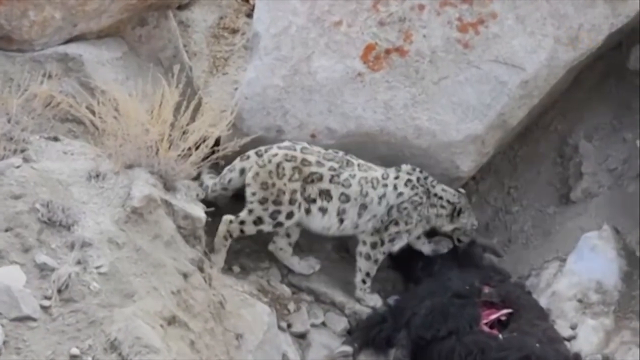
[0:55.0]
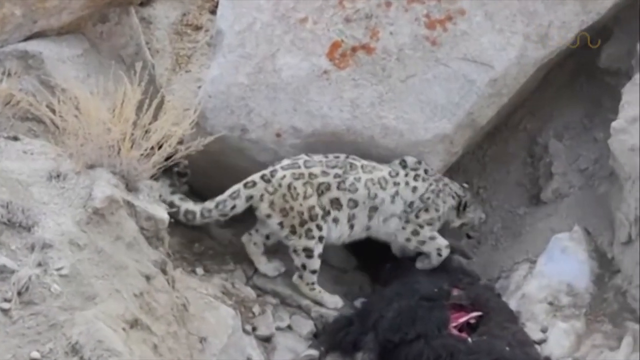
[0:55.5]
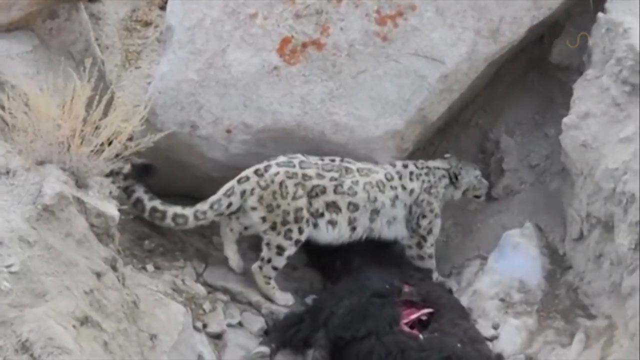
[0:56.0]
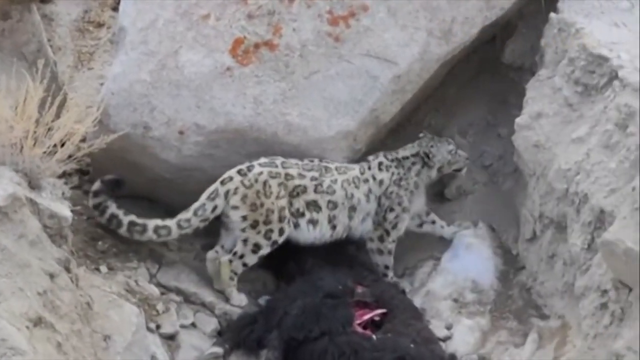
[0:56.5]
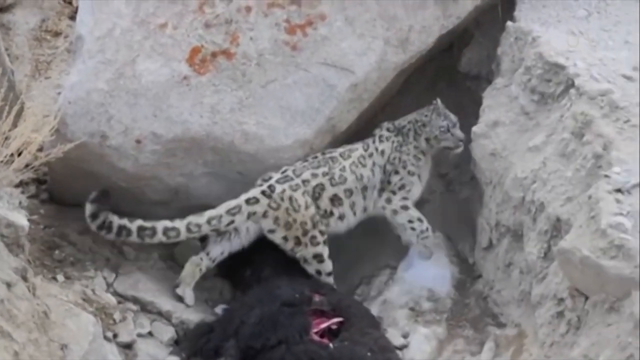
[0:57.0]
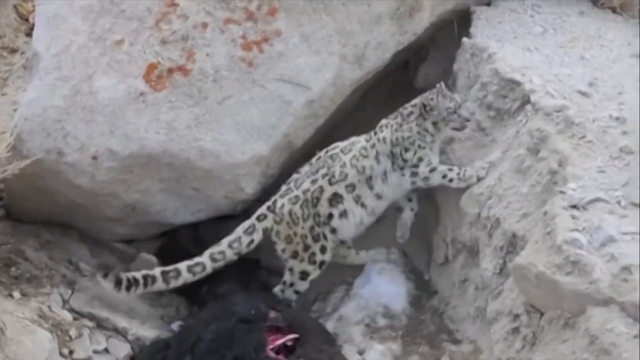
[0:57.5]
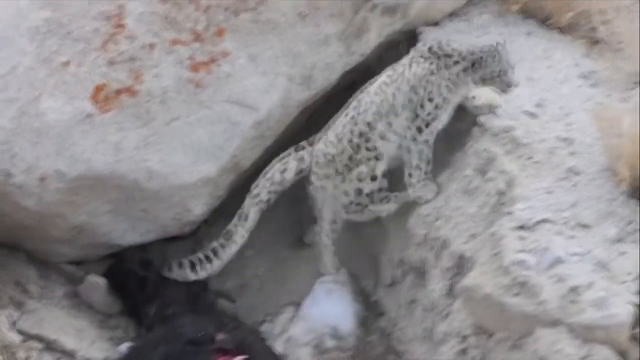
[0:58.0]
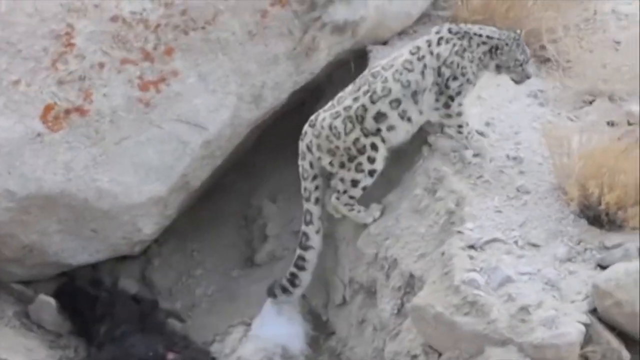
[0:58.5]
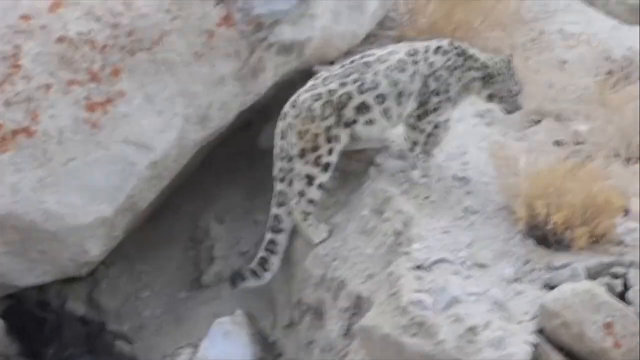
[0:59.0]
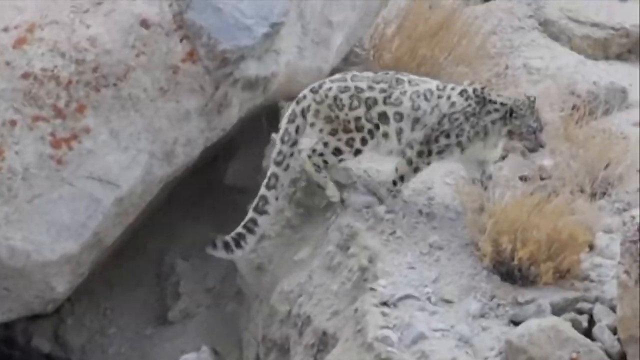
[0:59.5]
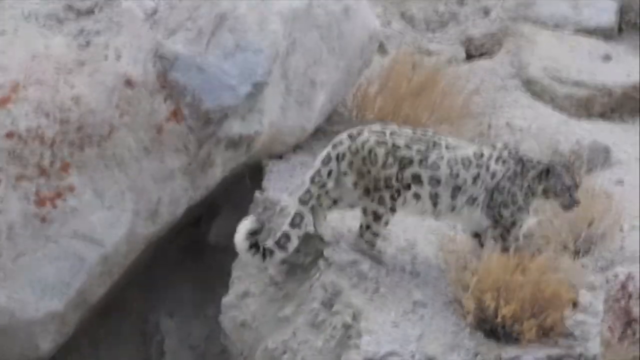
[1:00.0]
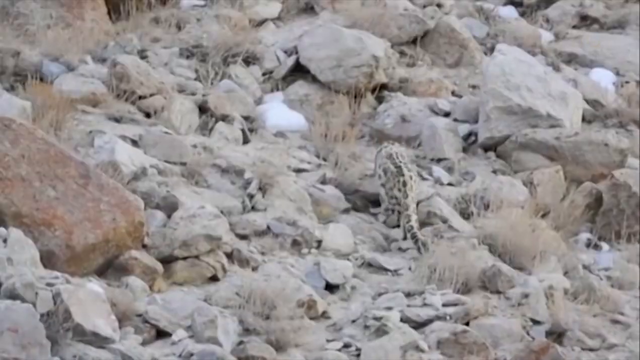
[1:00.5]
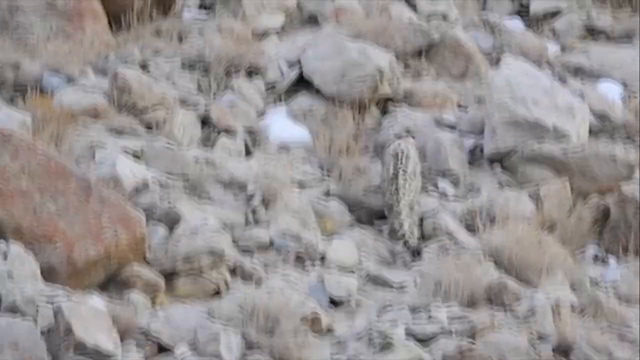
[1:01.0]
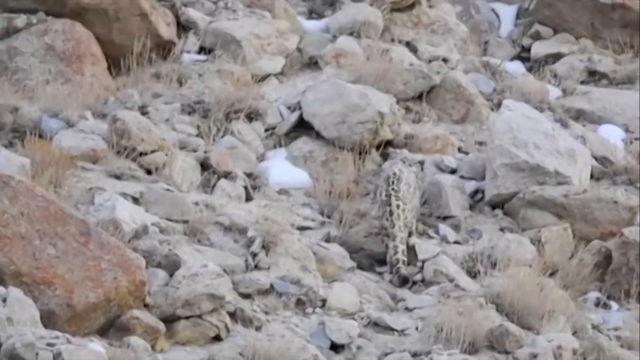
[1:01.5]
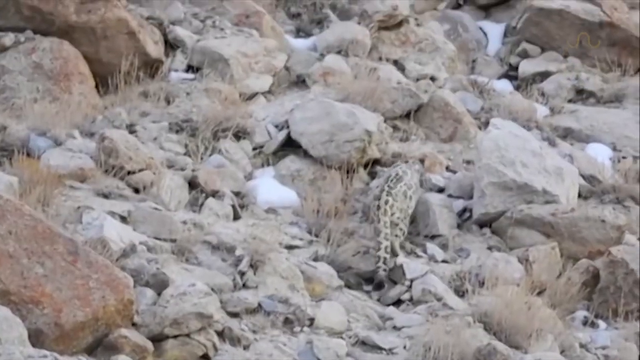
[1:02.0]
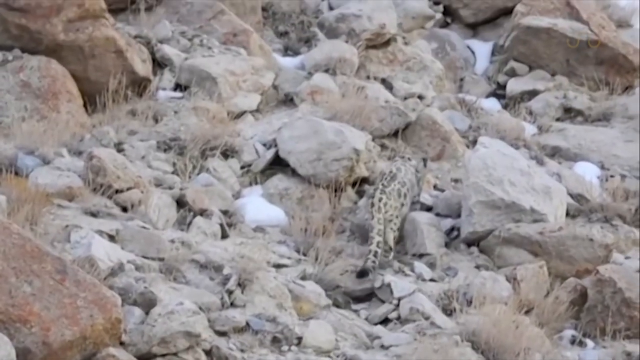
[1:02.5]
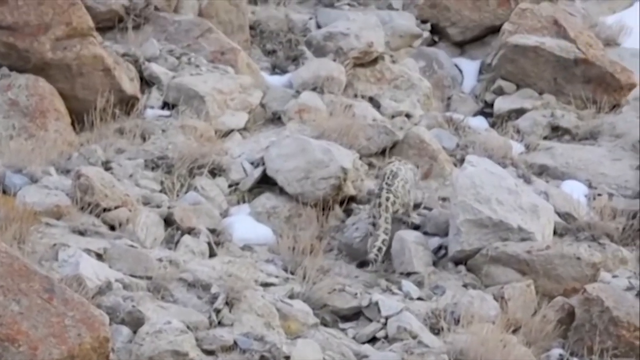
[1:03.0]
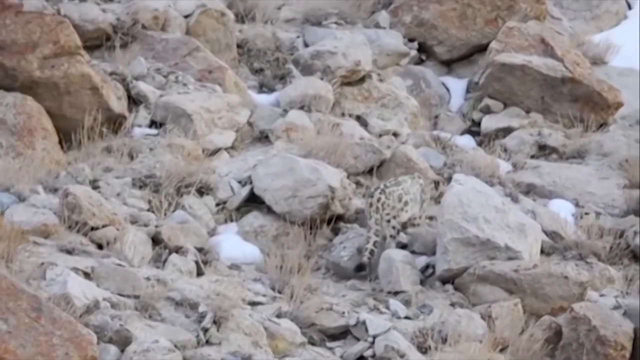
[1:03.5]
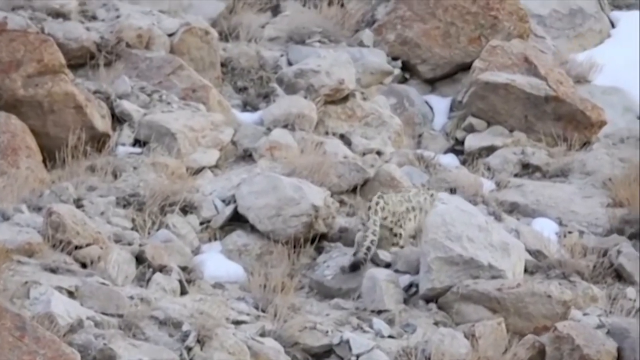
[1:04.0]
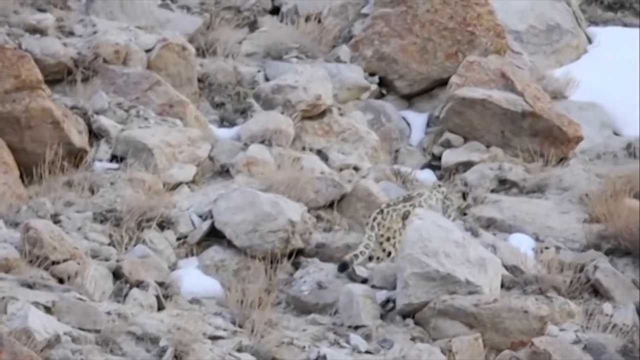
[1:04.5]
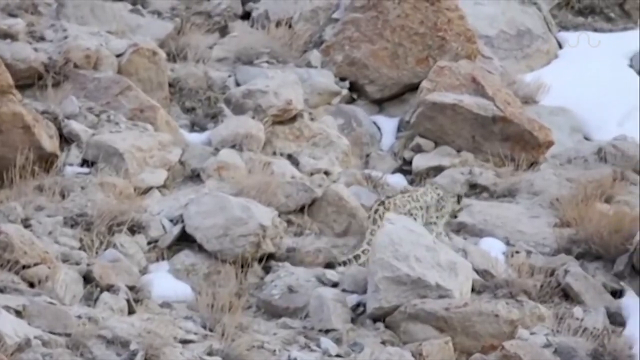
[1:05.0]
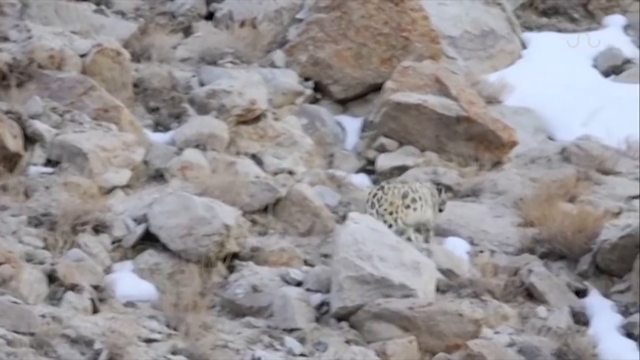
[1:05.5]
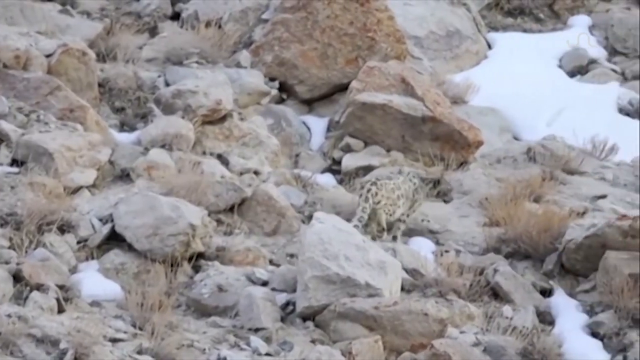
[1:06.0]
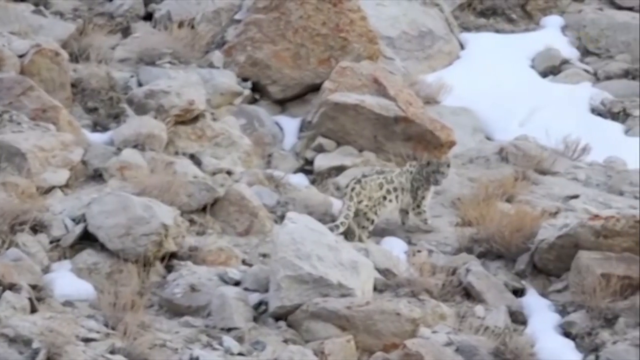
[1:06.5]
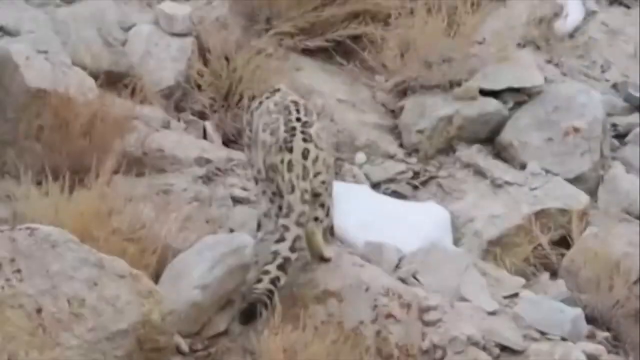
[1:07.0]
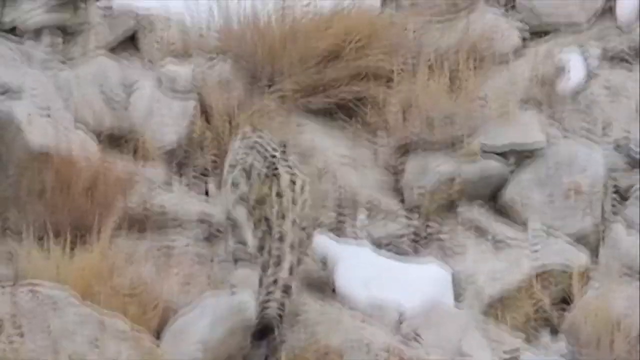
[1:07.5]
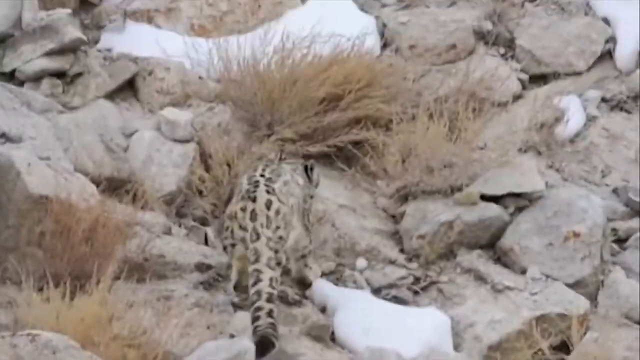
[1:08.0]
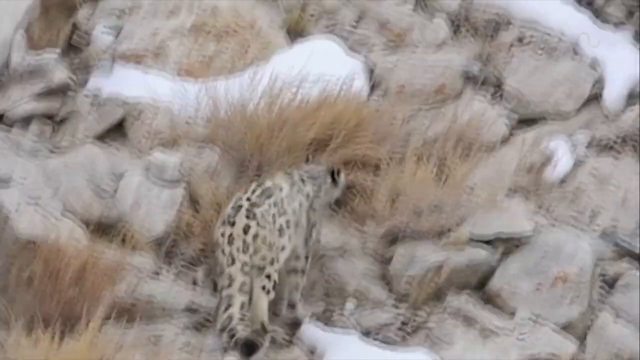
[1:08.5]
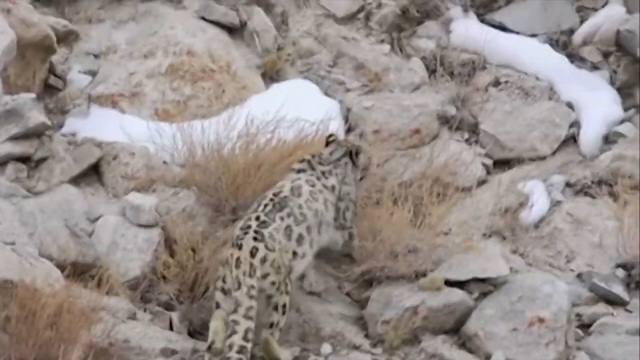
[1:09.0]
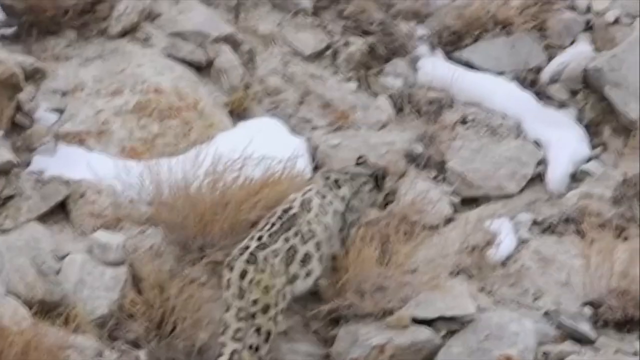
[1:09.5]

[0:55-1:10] A snow leopard climbs past the food from the kill, going over the dead animal and sort of still climbing up the mountain. The mountain is tan and gray, with brown, dry underbrush and some snow.